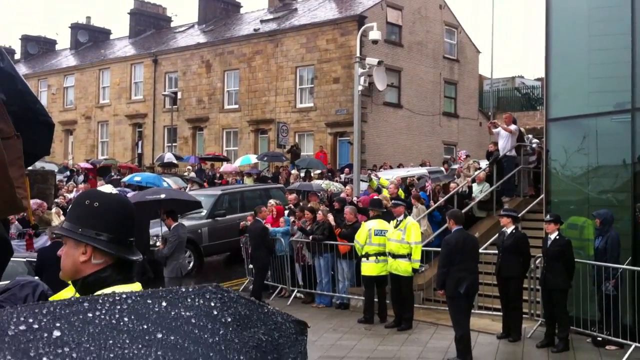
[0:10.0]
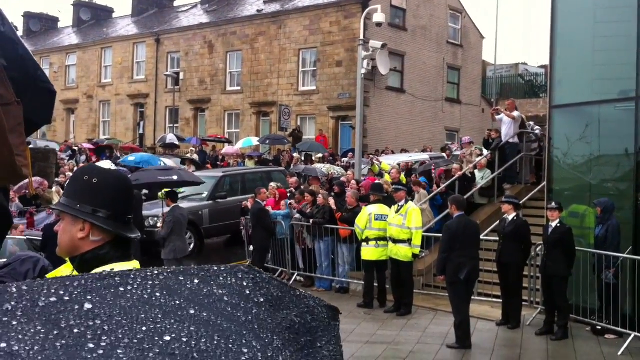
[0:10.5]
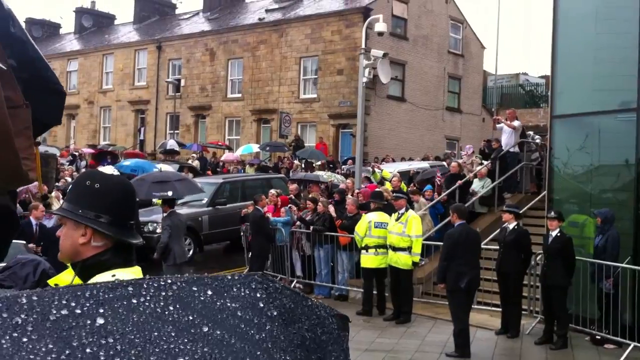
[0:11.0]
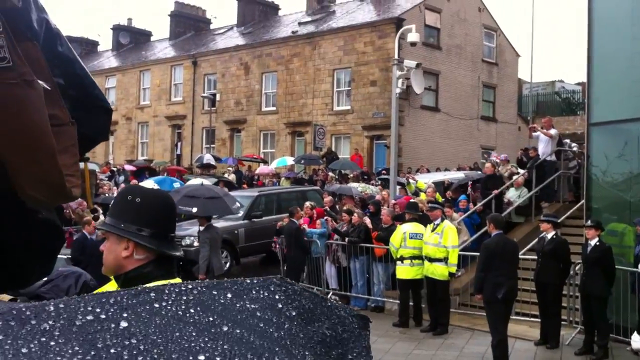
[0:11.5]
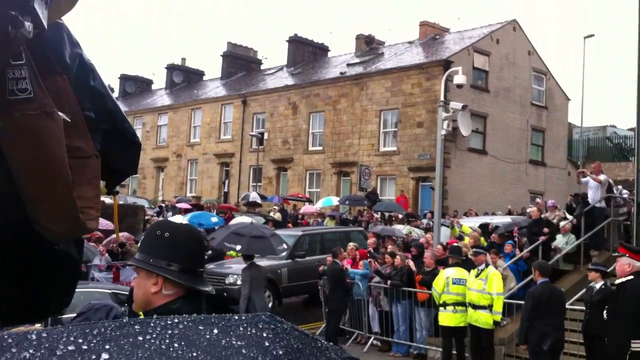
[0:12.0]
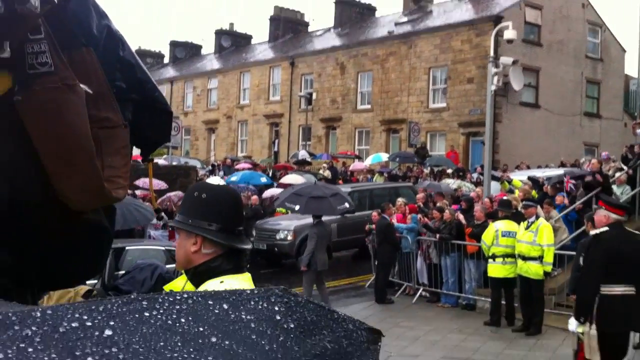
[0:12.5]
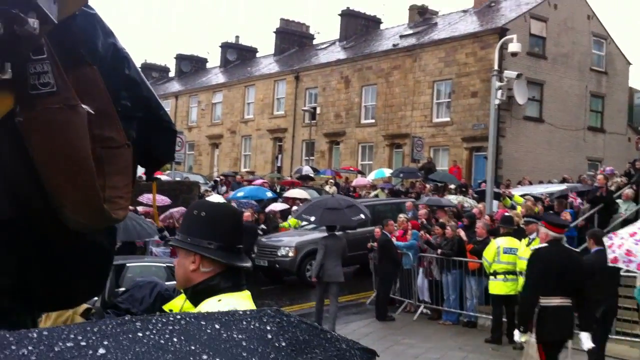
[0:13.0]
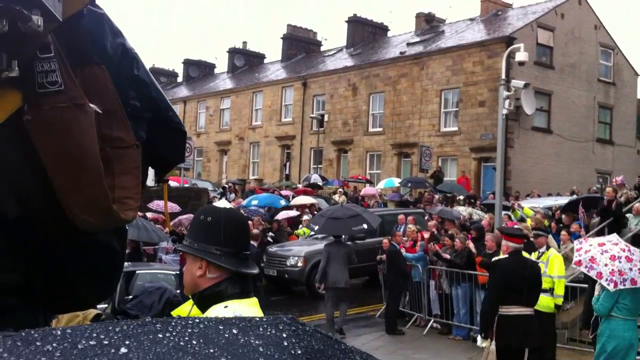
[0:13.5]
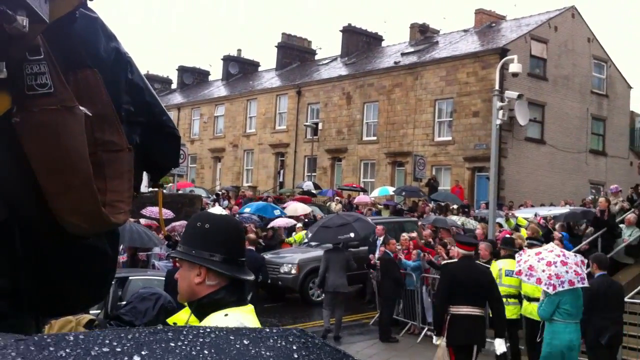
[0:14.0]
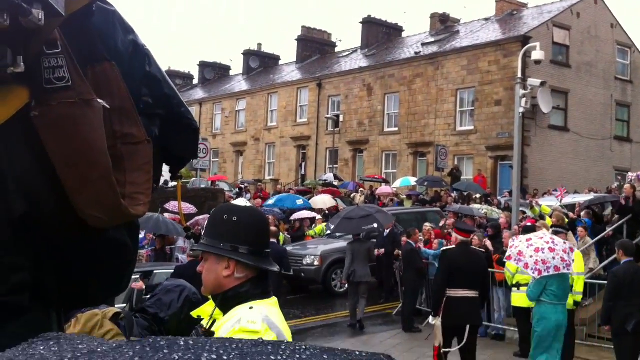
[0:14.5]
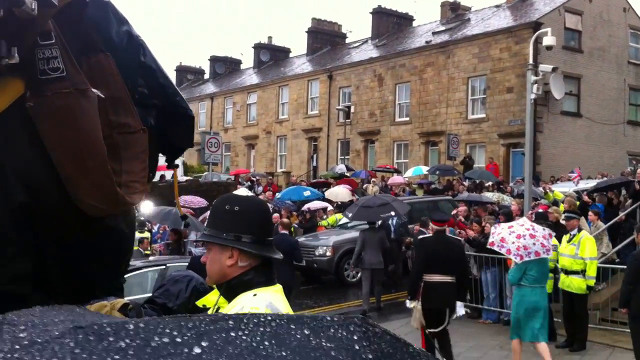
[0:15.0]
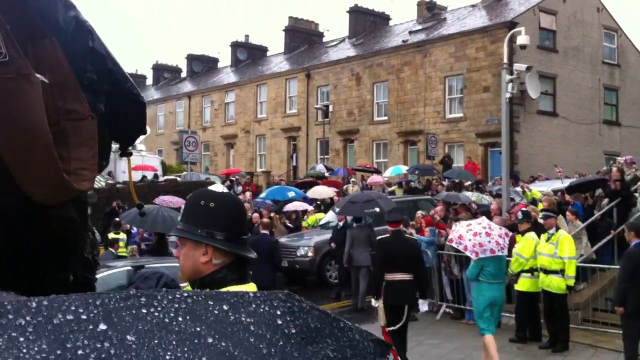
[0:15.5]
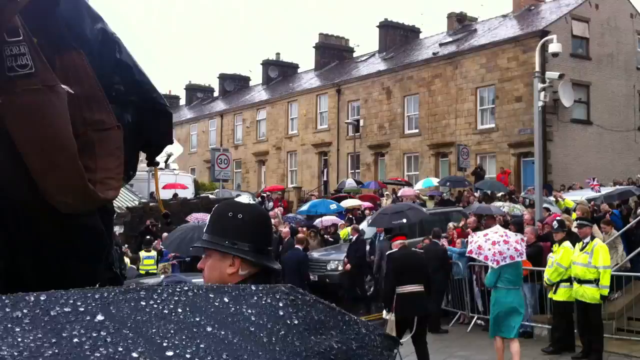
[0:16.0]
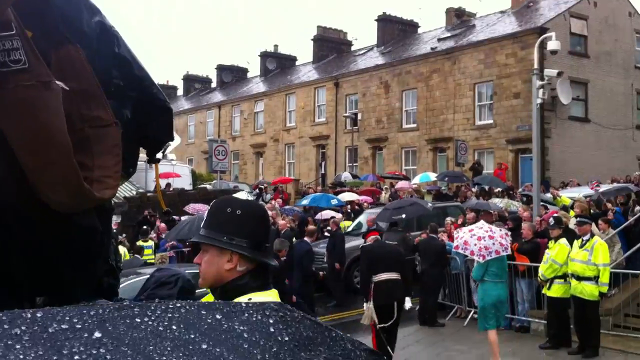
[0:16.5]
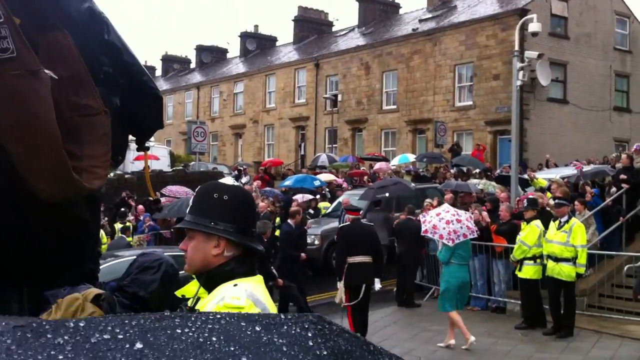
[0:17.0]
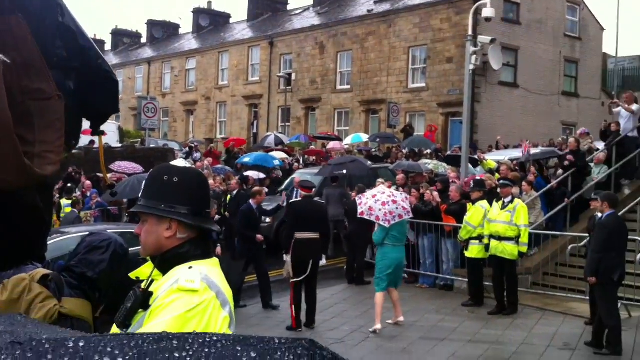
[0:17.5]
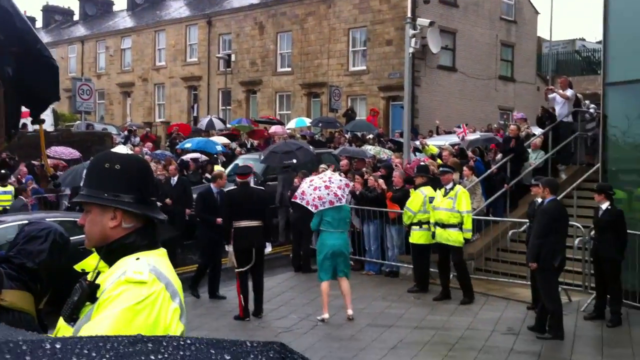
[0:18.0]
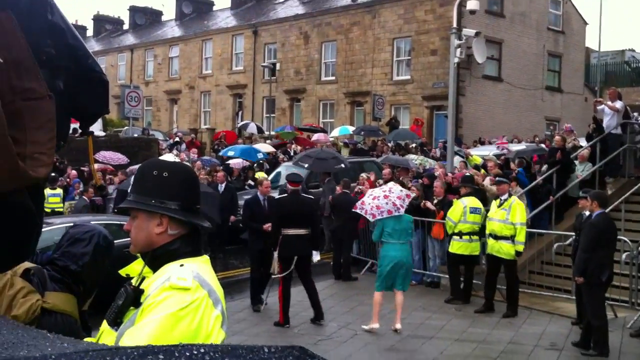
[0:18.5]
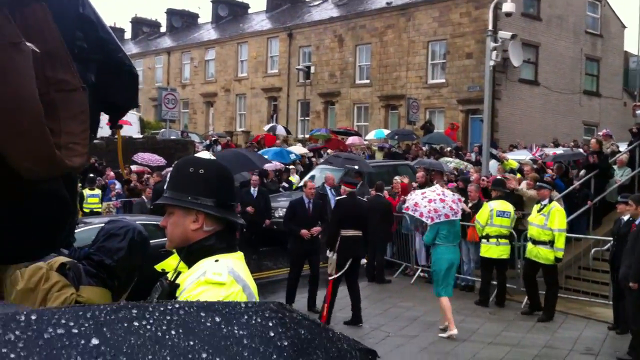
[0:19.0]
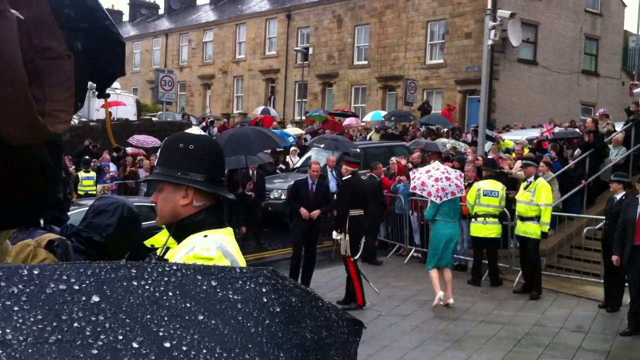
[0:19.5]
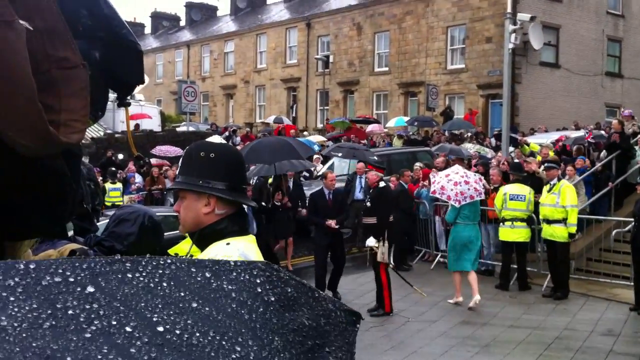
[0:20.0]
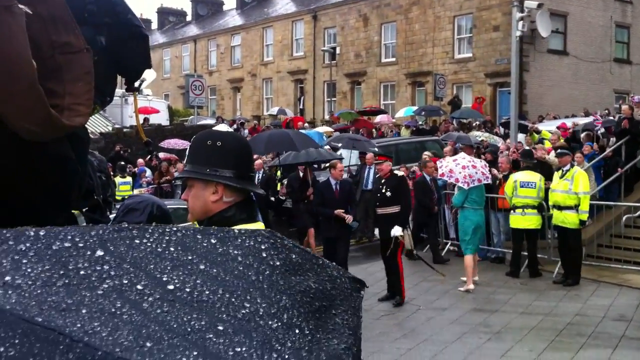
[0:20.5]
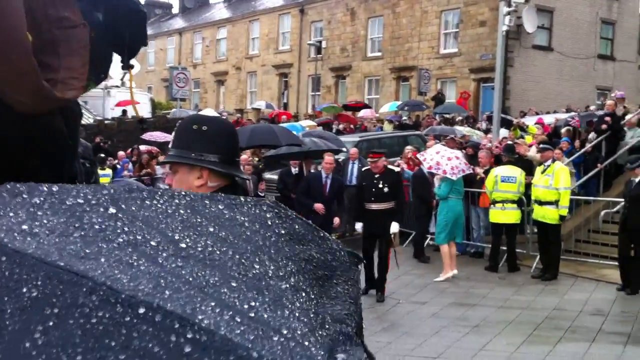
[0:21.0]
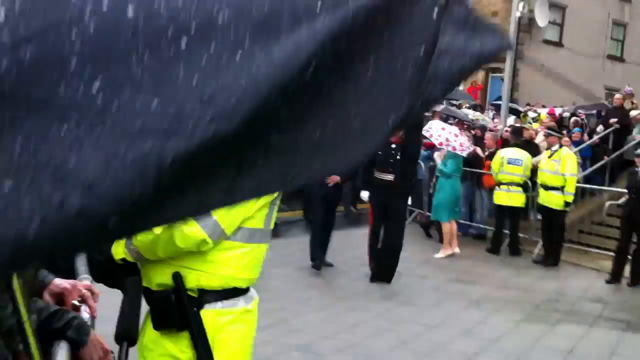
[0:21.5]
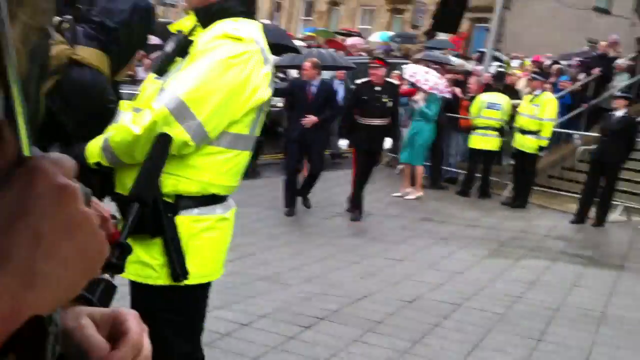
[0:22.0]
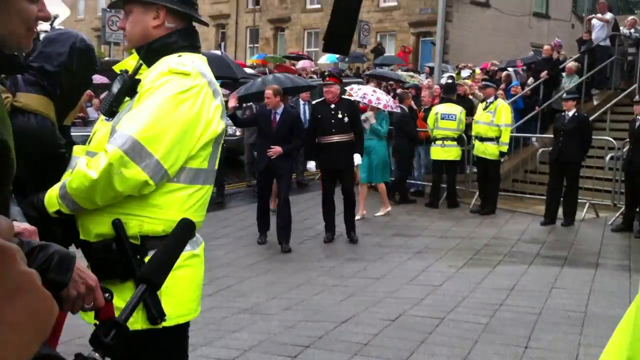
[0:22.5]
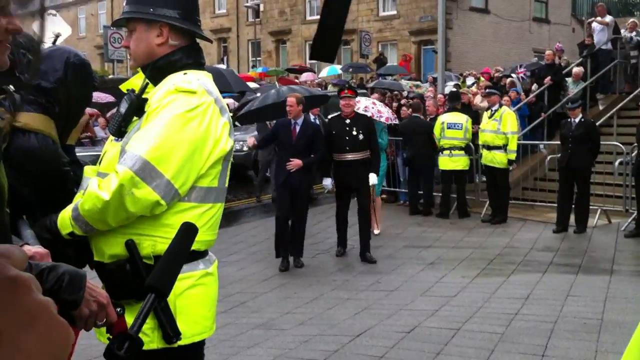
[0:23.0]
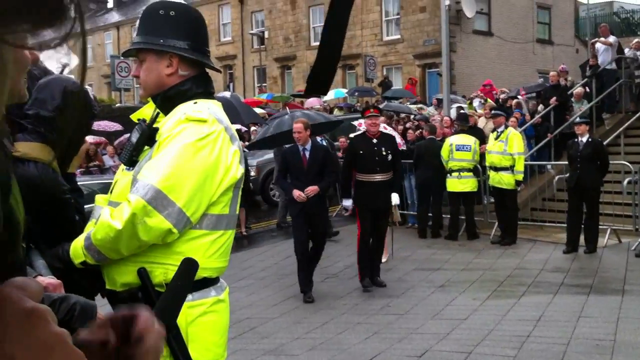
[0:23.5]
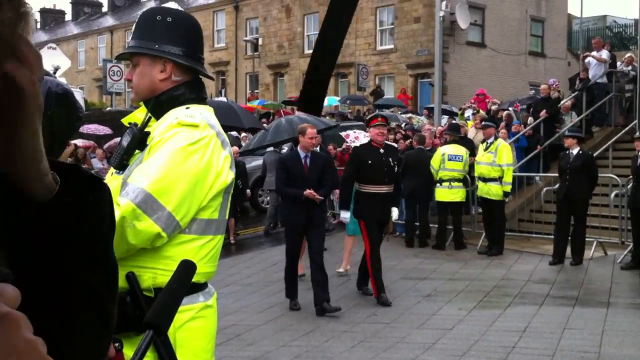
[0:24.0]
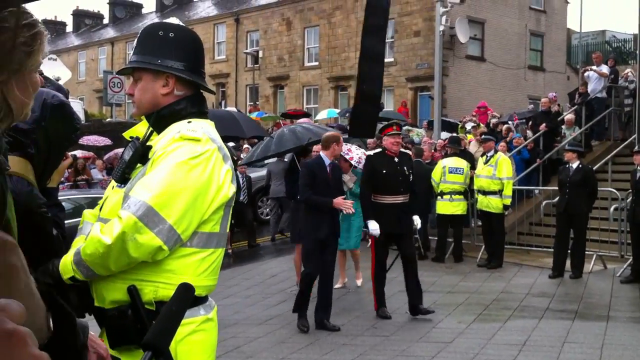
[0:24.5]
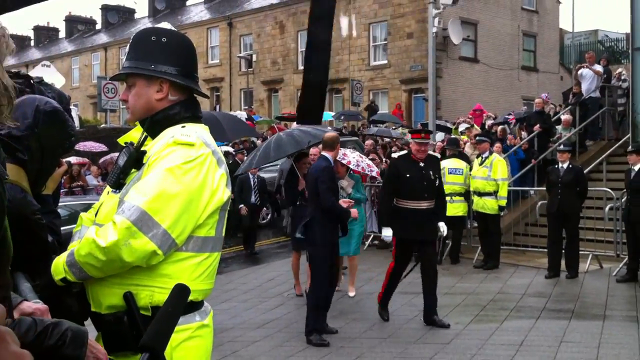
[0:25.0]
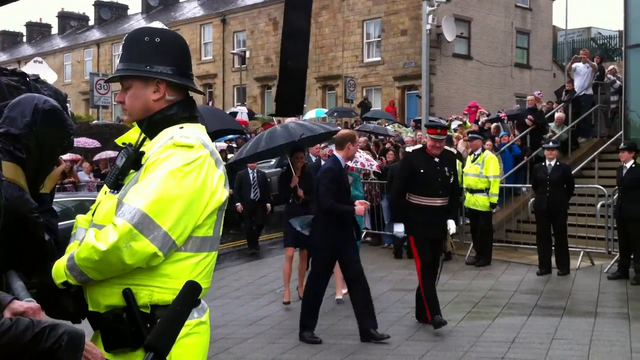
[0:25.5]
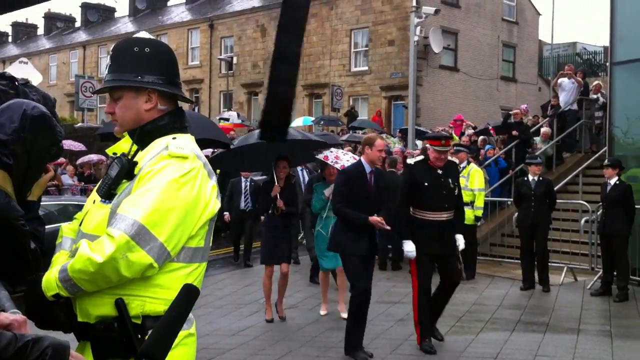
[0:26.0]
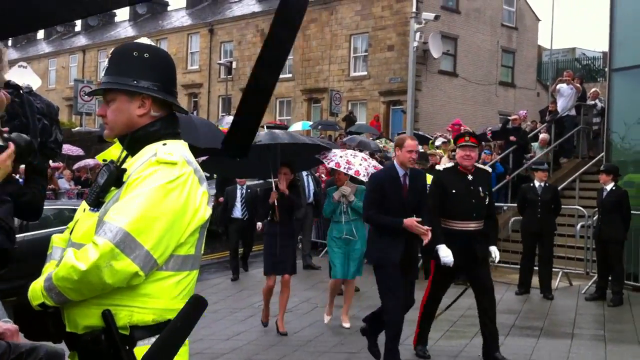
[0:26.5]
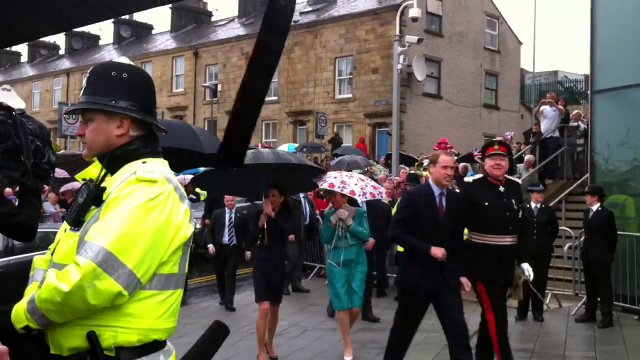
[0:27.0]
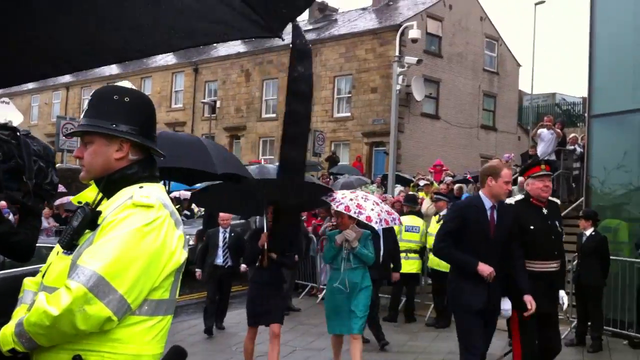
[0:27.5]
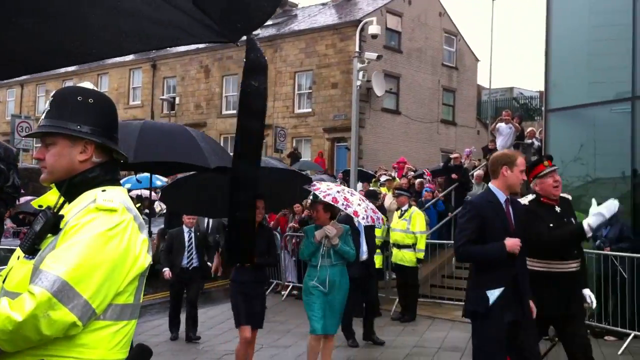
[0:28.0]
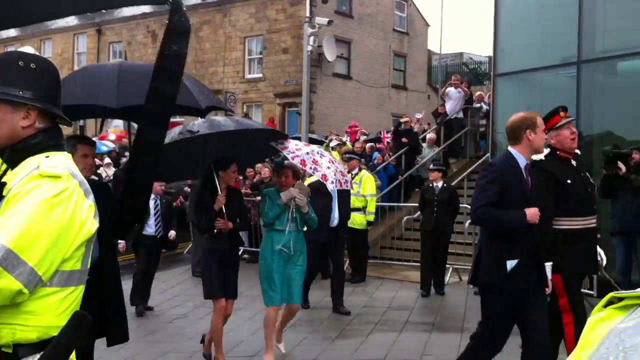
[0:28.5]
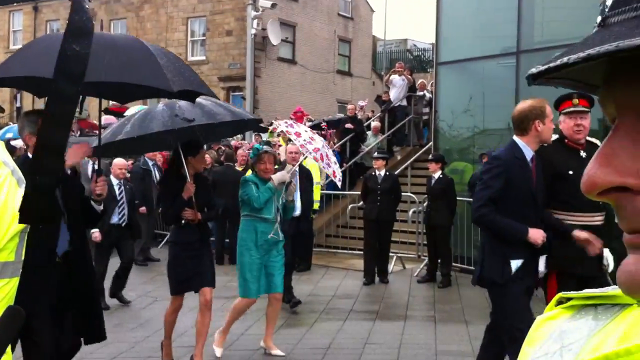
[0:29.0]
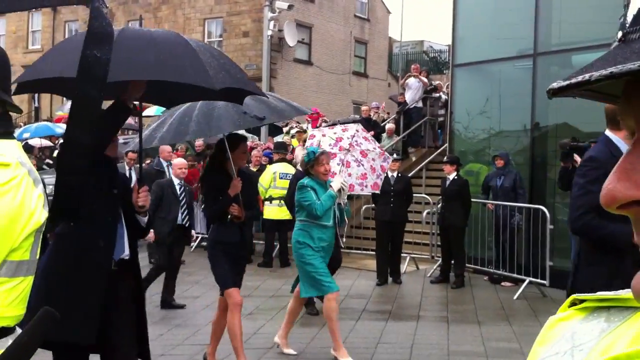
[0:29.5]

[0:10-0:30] In England, it looks like somebody famous is about to come out of the cars and go into a building. Quite a few police are about, some in high-vis and some in fully black clothes, all with their hats on, and loads of different coloured umbrellas are up because it is a rainy day. In the background is a row of terraced houses with brick fronts, with some CCTV cameras, satellite dishes, street lamps and a 30 mile per hour speed sign. Somebody in a high-ranking military uniform goes towards the car and greets Prince William, the Prince of Wales. A lady in a green dress beside the man in uniform greets another lady who has got out of the car, presumably the prince's wife, Catherine, Princess of Wales. It is hard to see, and they are kind of escorted by the person in the military uniform towards the glass-fronted building.